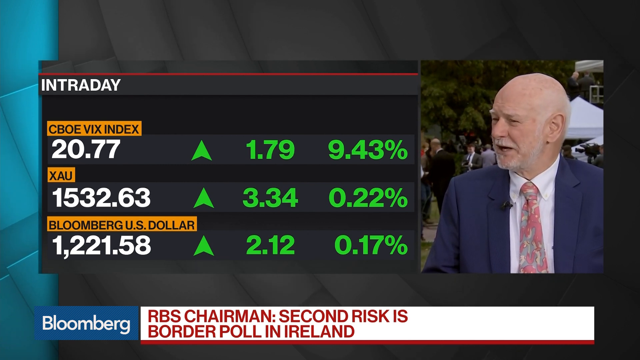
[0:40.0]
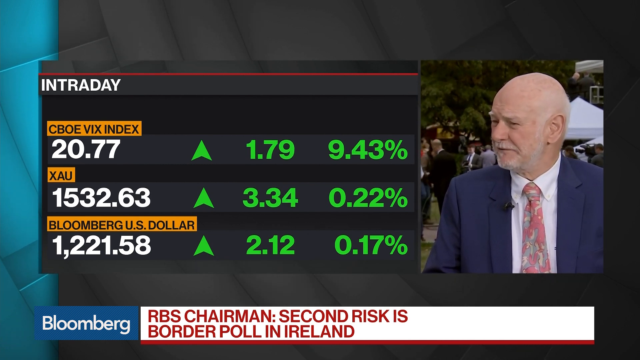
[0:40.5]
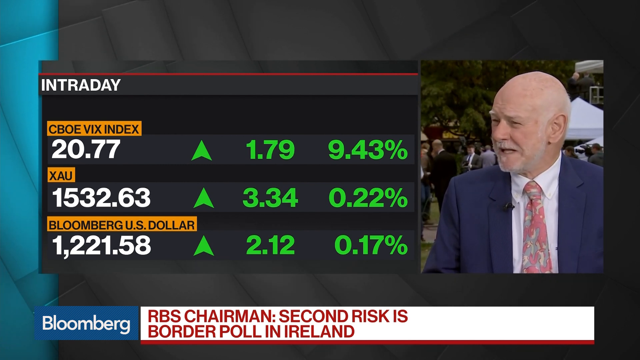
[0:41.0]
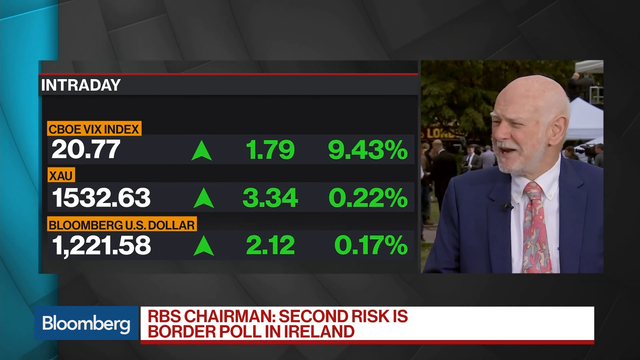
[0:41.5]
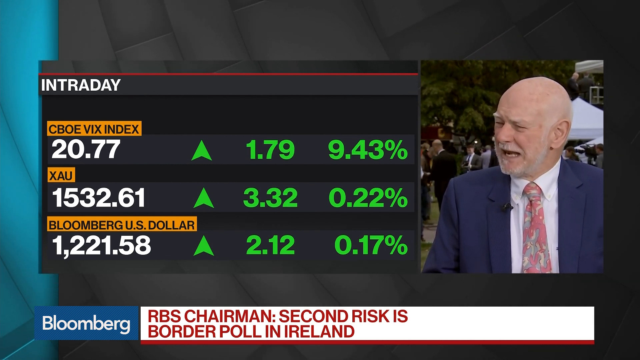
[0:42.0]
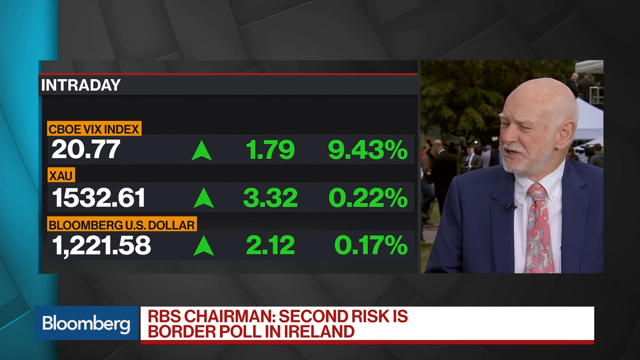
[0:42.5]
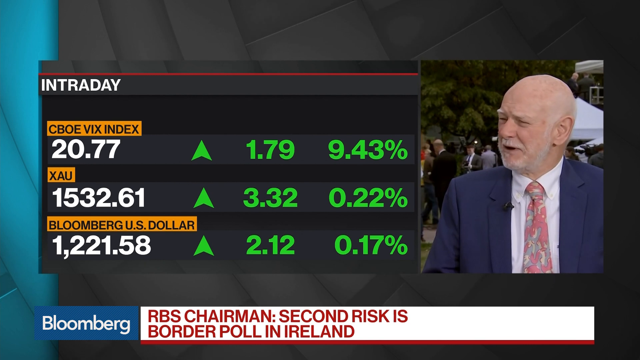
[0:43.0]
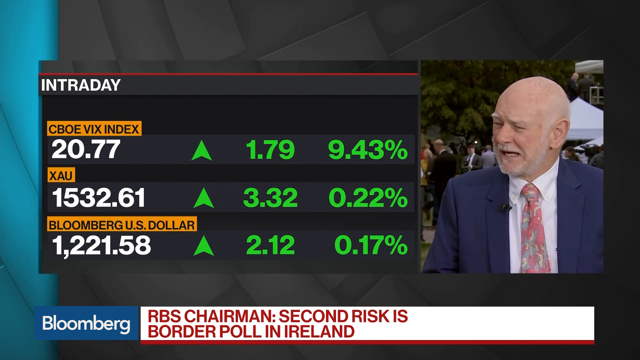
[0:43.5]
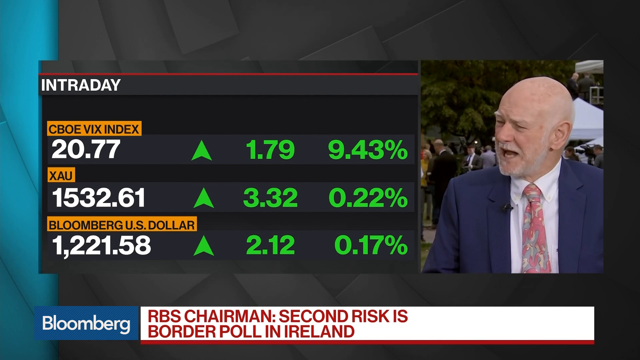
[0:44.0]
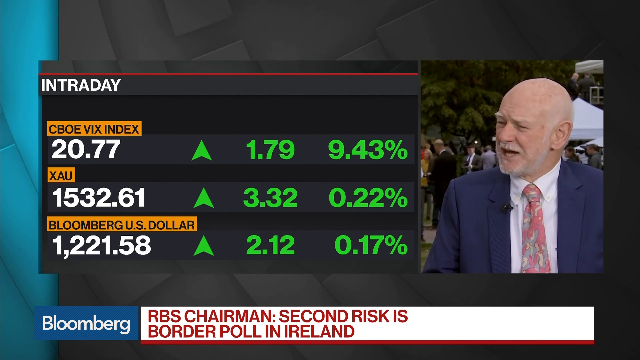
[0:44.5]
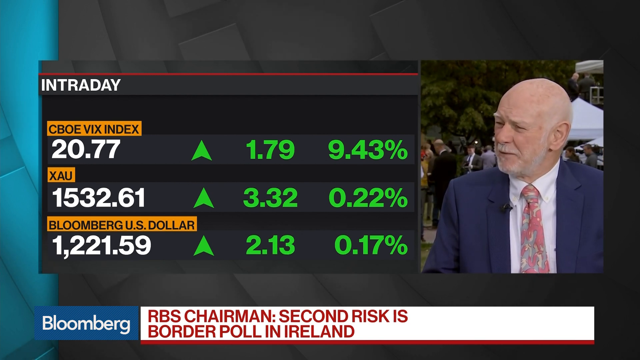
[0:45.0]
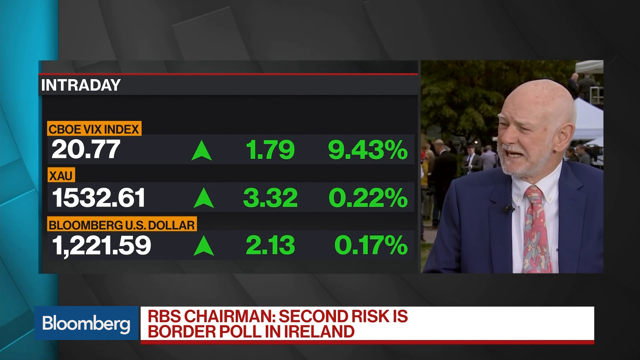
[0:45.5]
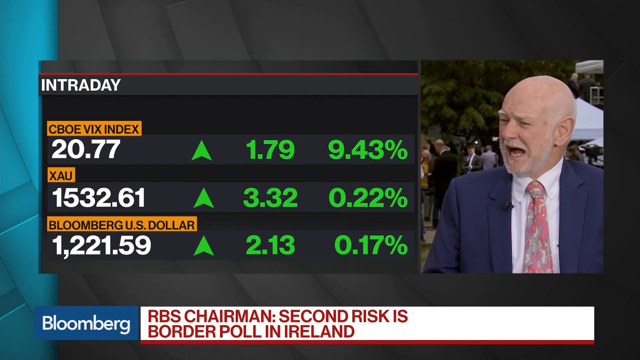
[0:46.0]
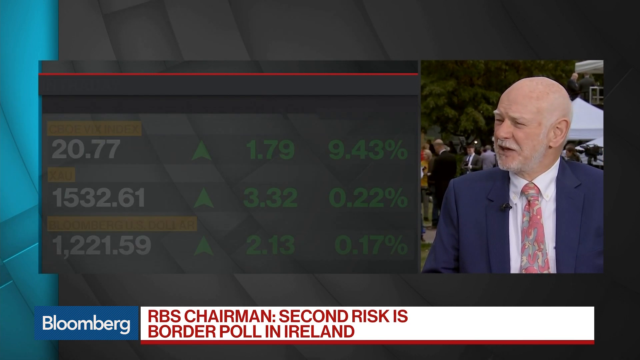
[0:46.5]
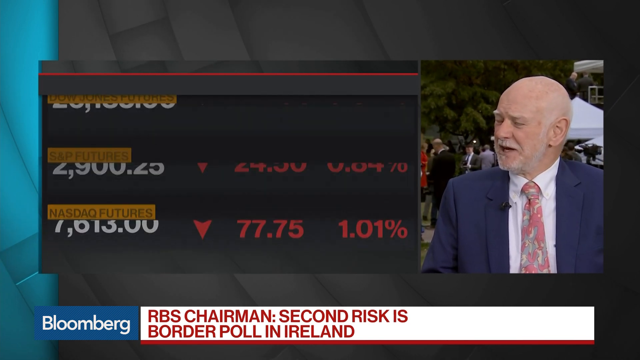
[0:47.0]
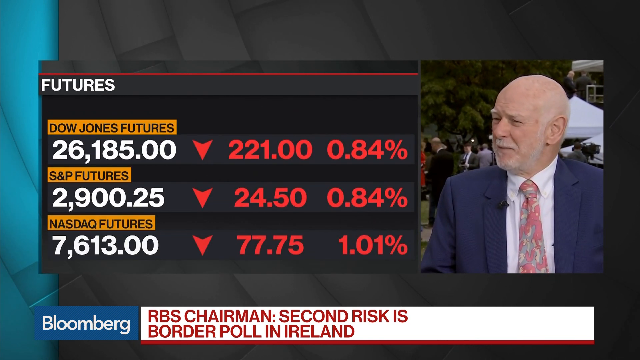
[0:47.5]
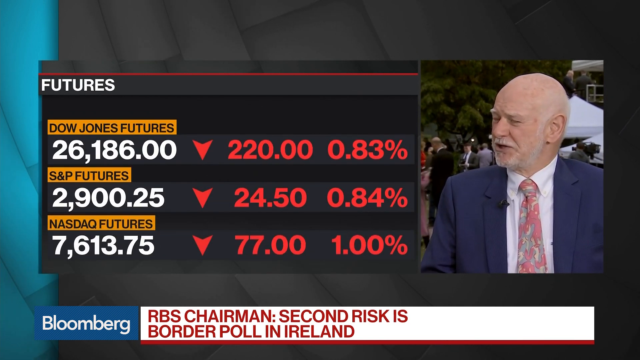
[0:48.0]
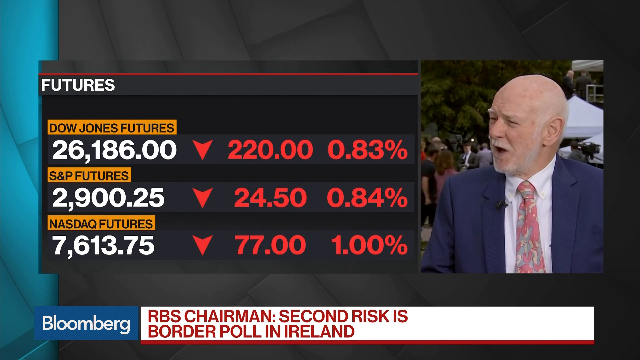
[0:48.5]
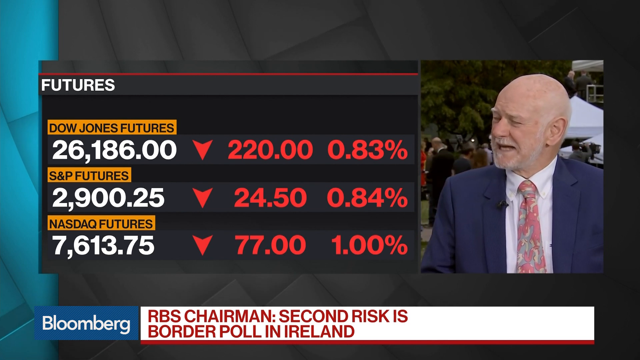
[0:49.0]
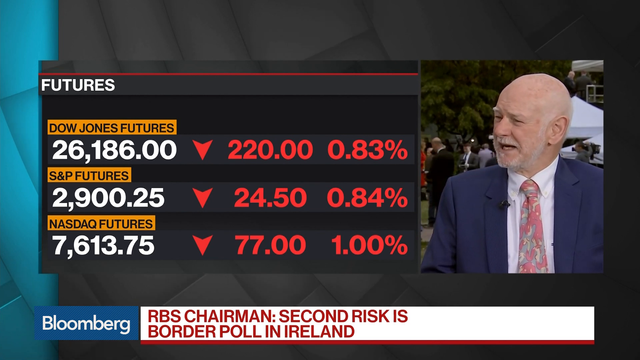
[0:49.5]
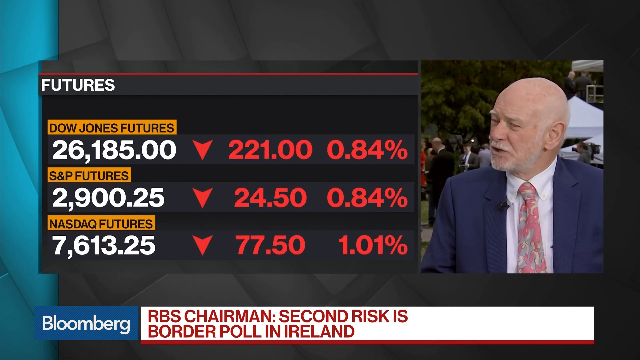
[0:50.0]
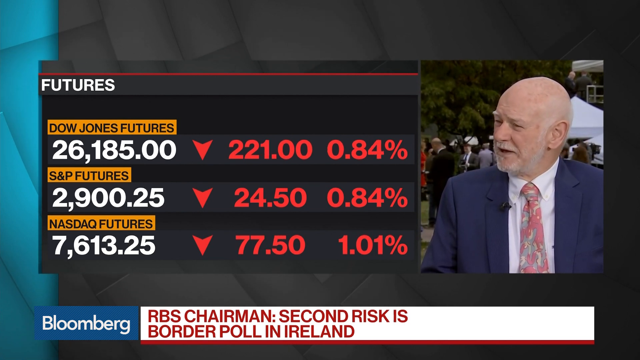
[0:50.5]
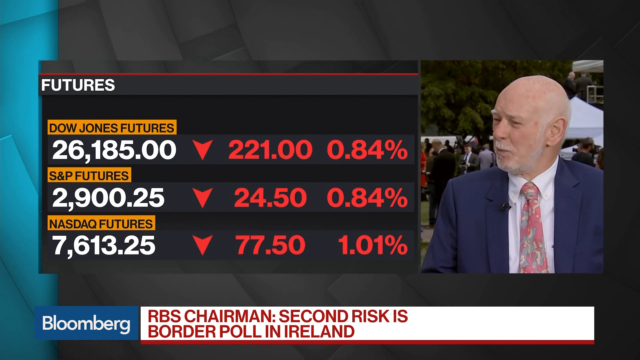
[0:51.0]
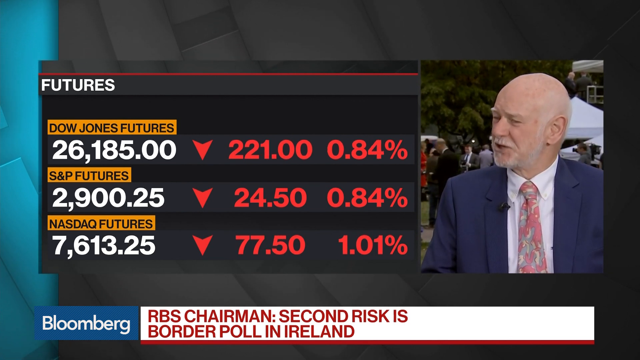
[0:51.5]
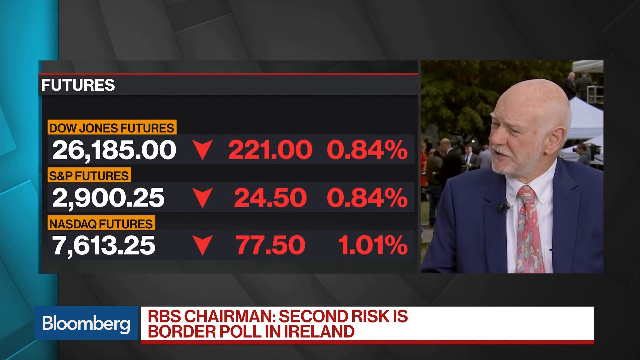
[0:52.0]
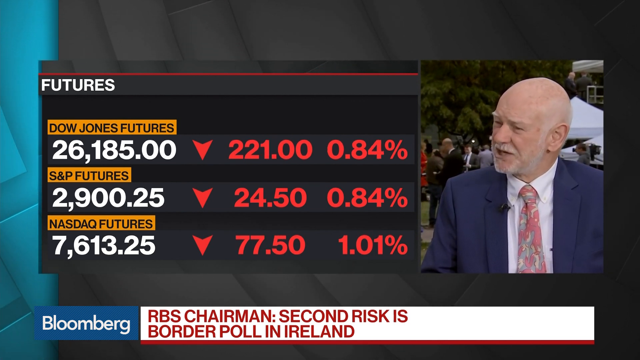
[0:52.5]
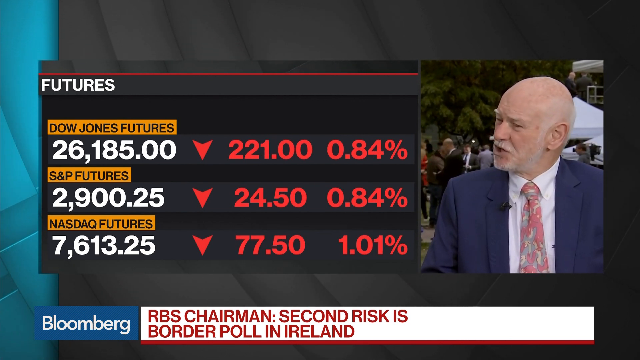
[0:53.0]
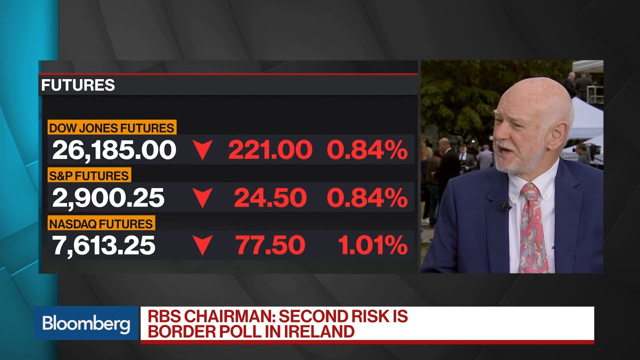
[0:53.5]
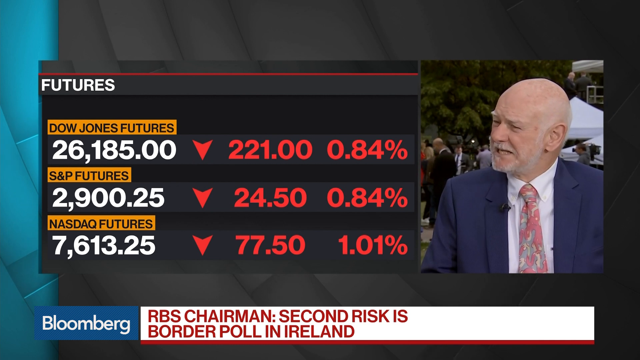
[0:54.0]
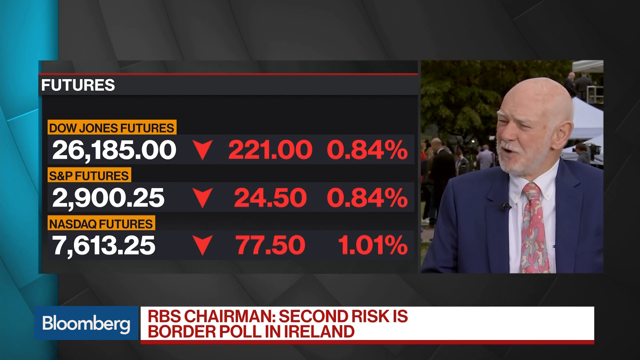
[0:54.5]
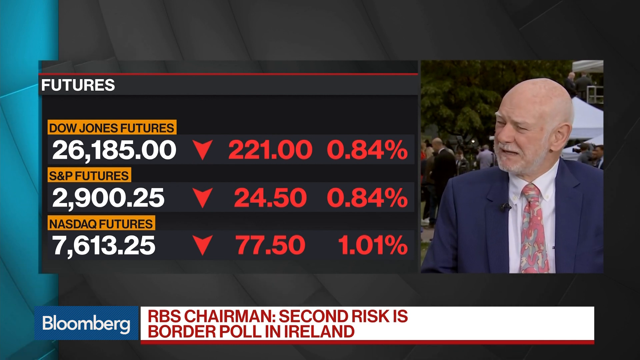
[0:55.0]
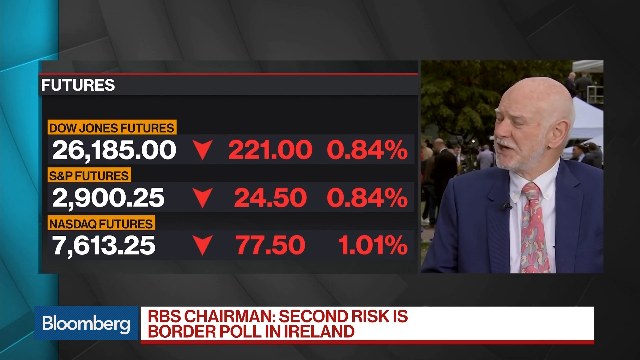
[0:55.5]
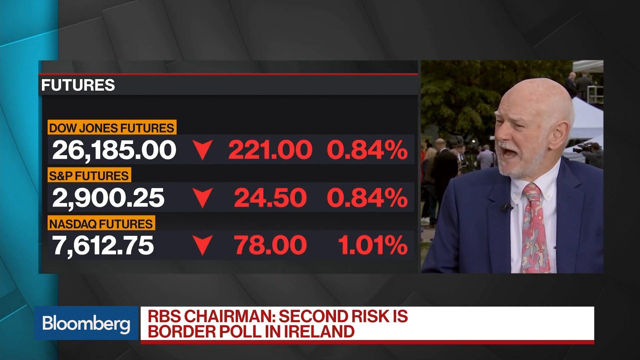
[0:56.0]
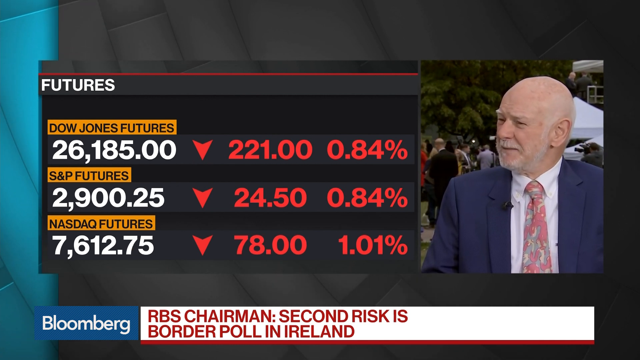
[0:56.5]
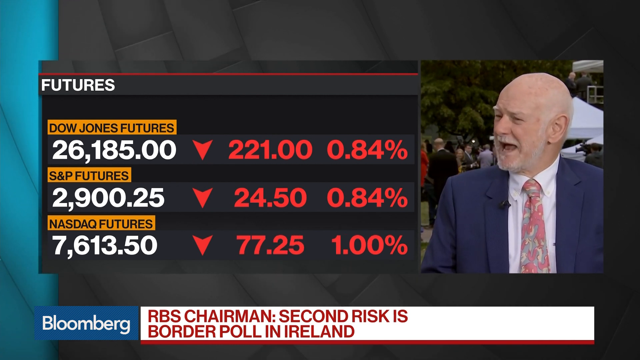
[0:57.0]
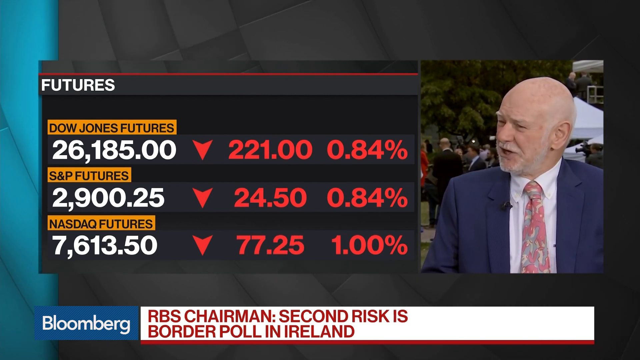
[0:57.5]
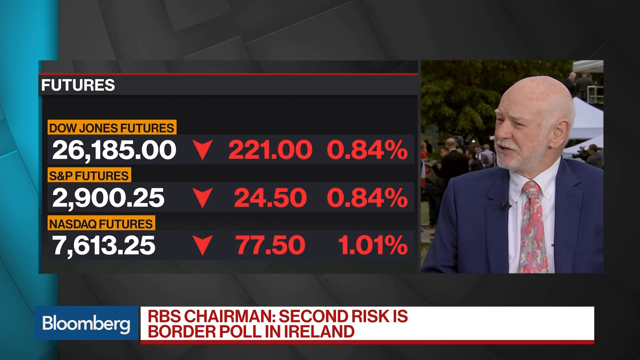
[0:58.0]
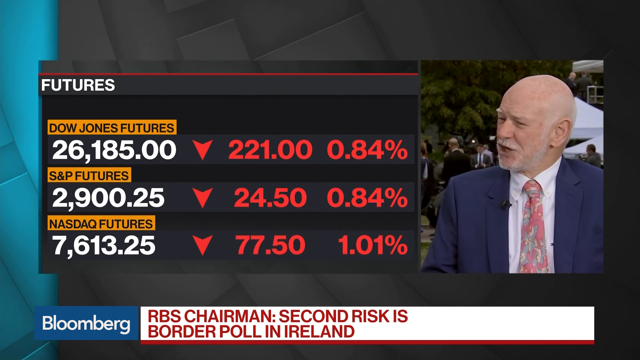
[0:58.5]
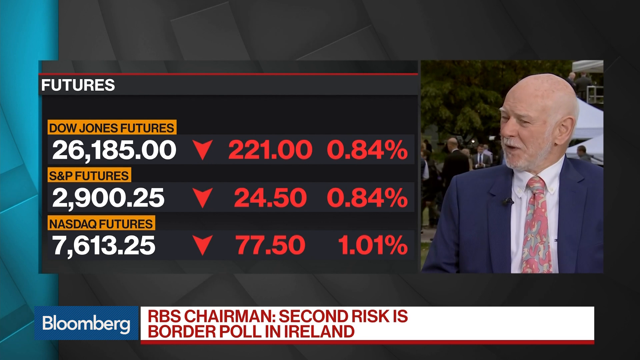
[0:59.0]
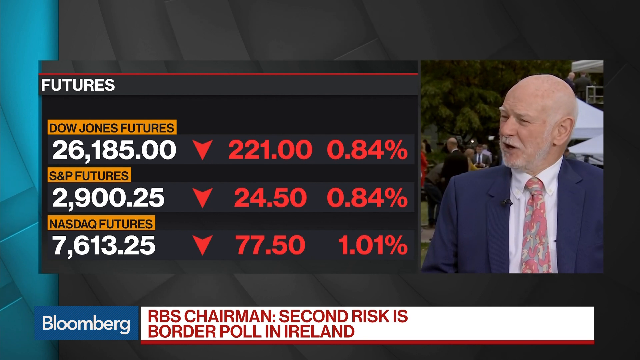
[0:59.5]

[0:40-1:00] The male presenter is still talking. The CBOFIX index is at 20.77 with a green upward arrow, up 1.79 and 9.43%. The Zao reads 15,32.63 with an upward arrow, up 3.34, 0.22%. The Bloomberg arrow moves up and down; the Bloomberg US dollar, in green, is at 12,159 with a green arrow up 2.1, 0.17%. The figures and arrows change, moving from the negative red to the positive green. The reporters are in a public place, with vehicles moving, people gathered together having a discussion, and some people walking on their own.